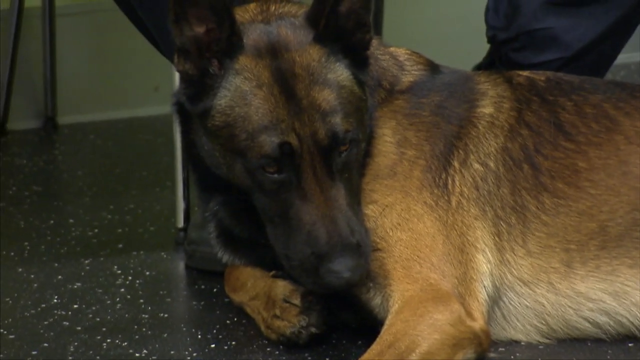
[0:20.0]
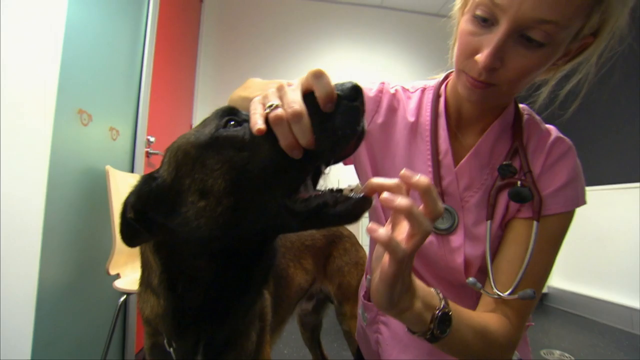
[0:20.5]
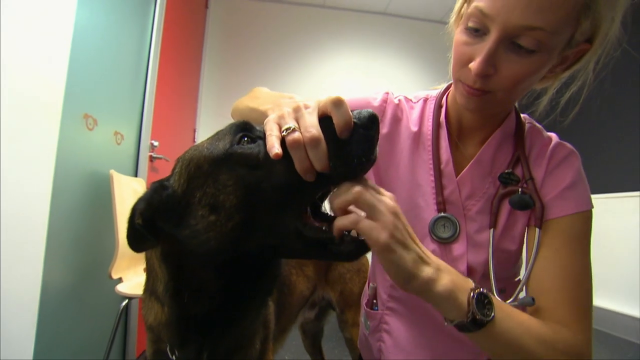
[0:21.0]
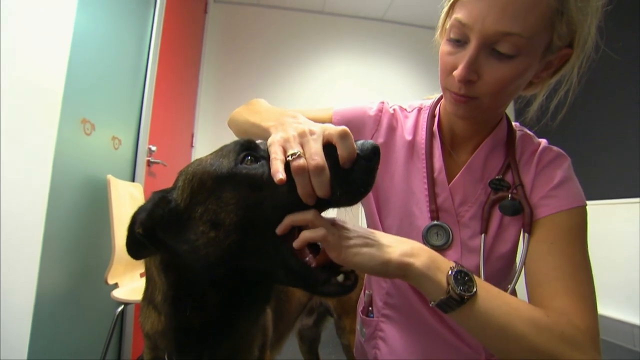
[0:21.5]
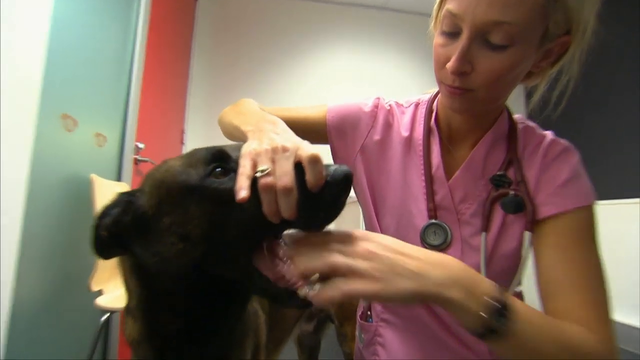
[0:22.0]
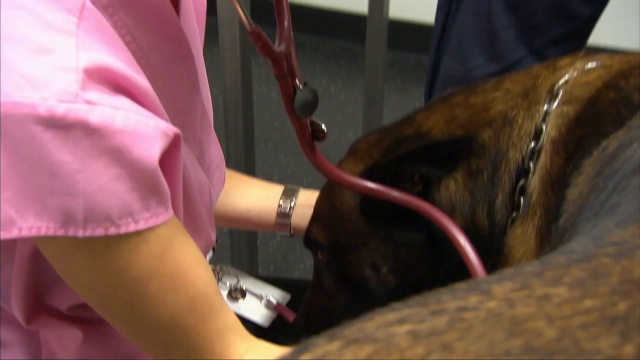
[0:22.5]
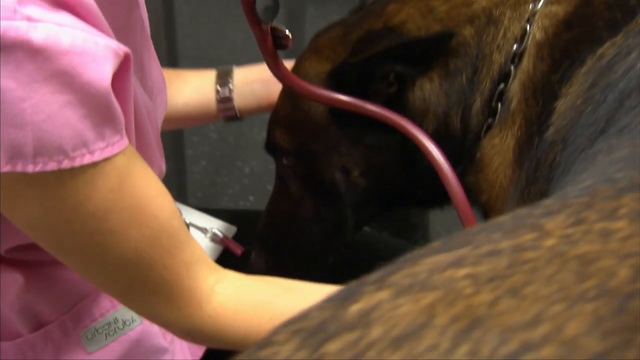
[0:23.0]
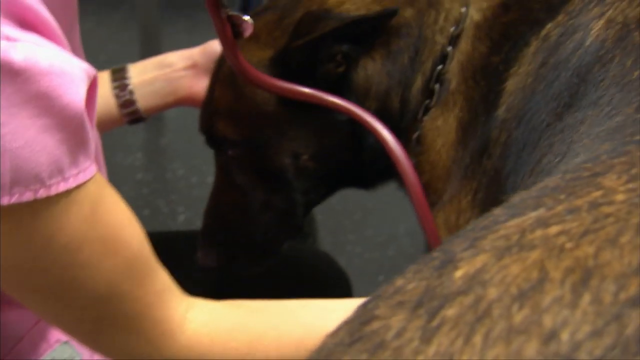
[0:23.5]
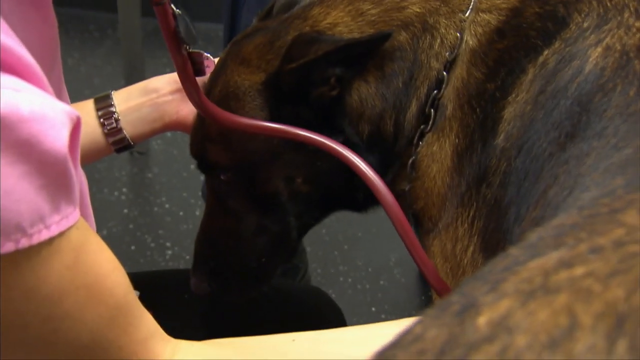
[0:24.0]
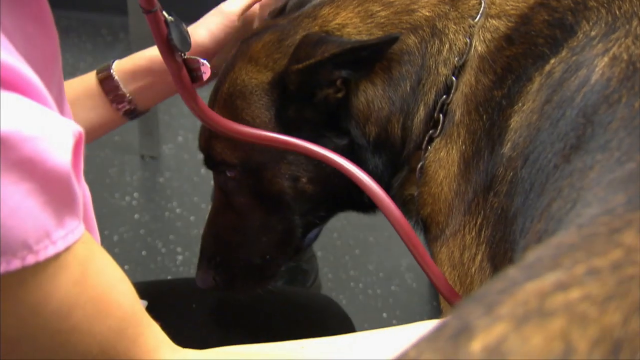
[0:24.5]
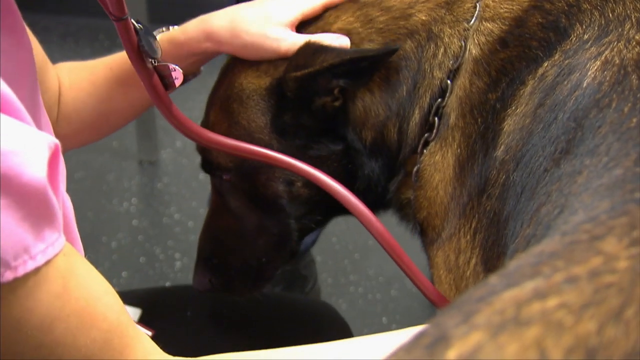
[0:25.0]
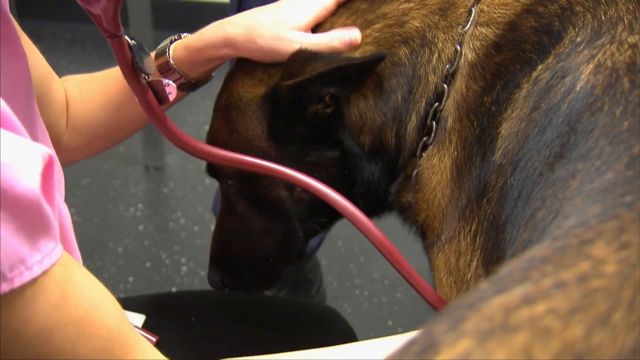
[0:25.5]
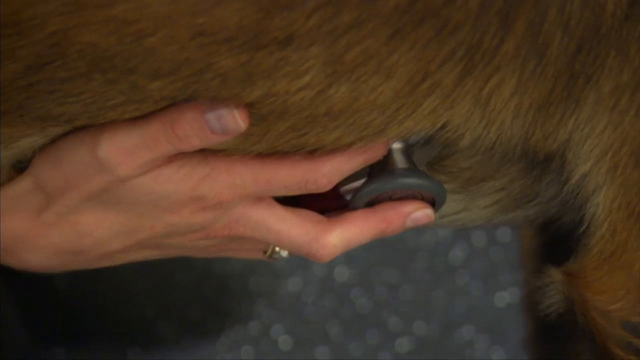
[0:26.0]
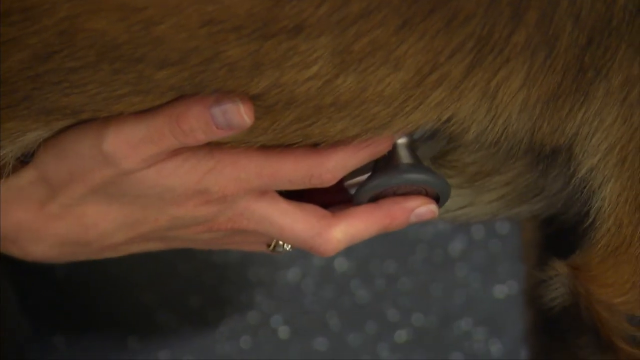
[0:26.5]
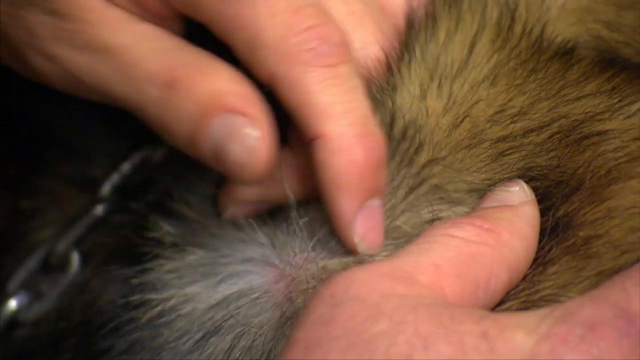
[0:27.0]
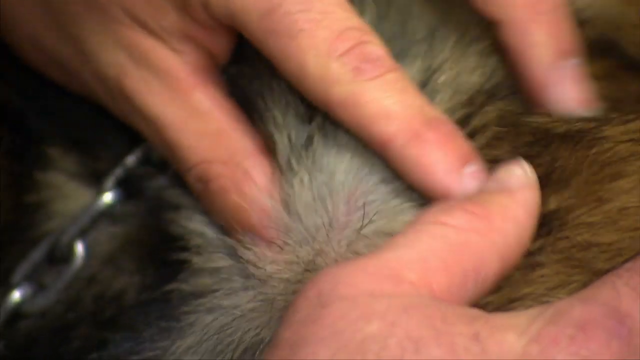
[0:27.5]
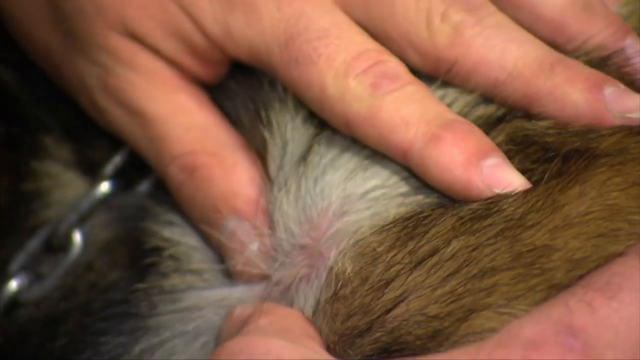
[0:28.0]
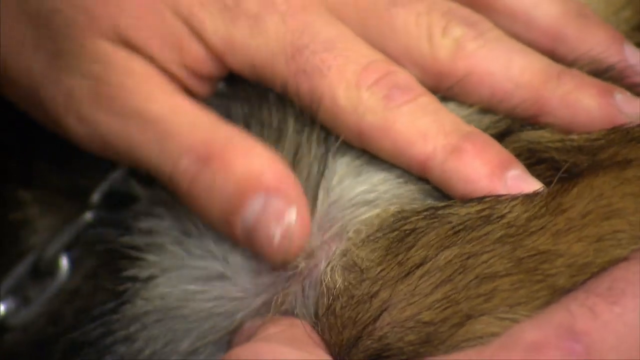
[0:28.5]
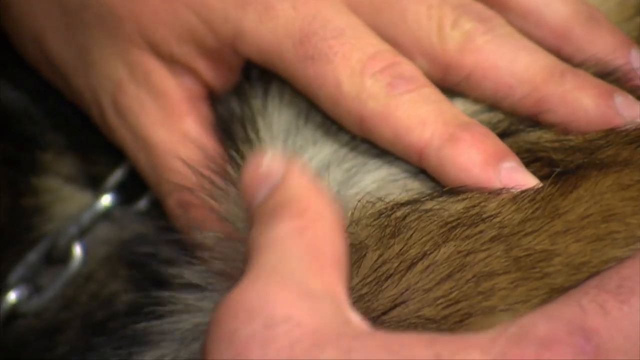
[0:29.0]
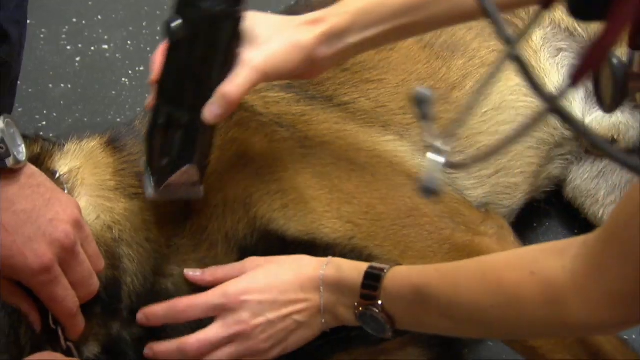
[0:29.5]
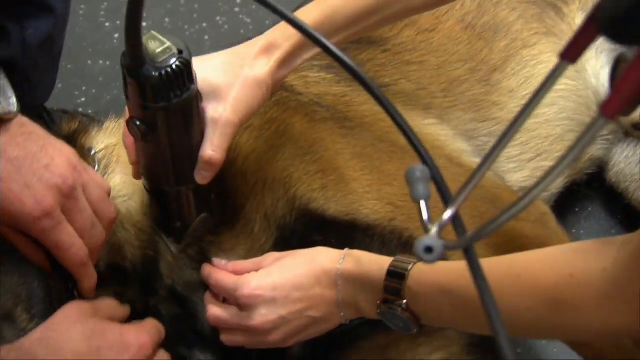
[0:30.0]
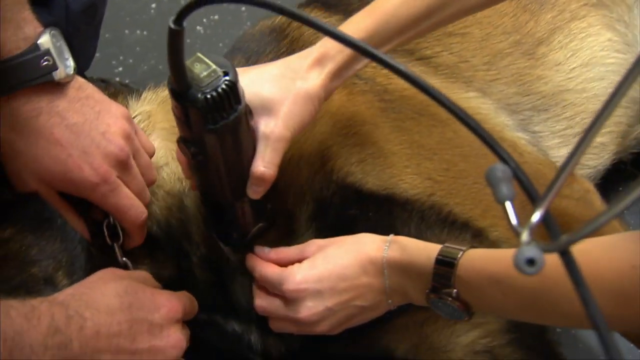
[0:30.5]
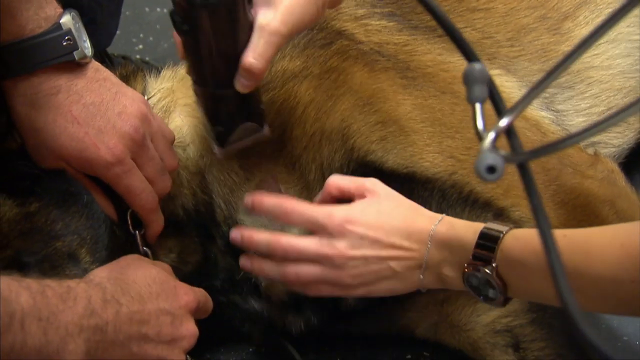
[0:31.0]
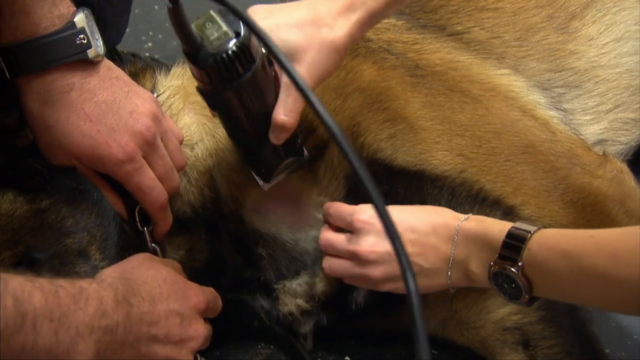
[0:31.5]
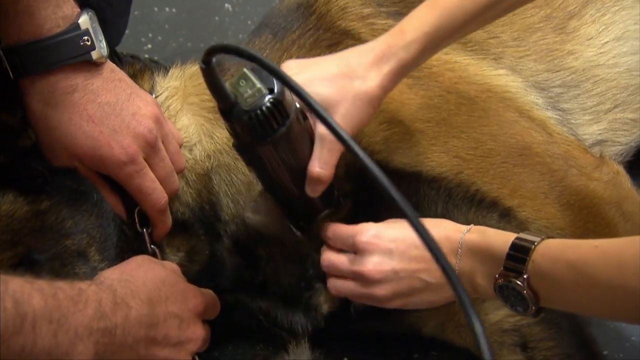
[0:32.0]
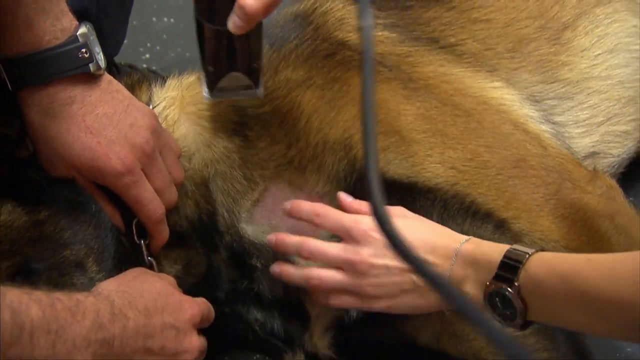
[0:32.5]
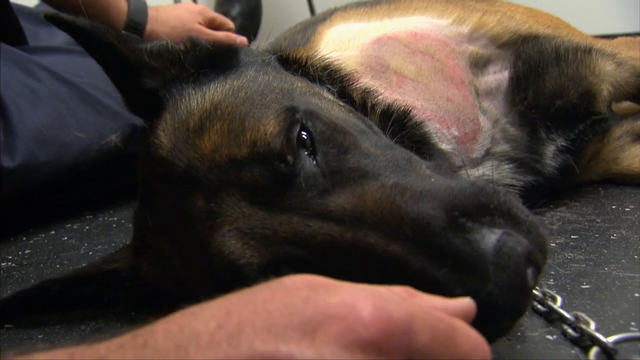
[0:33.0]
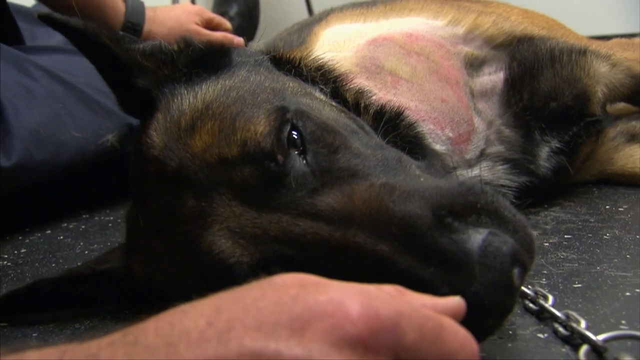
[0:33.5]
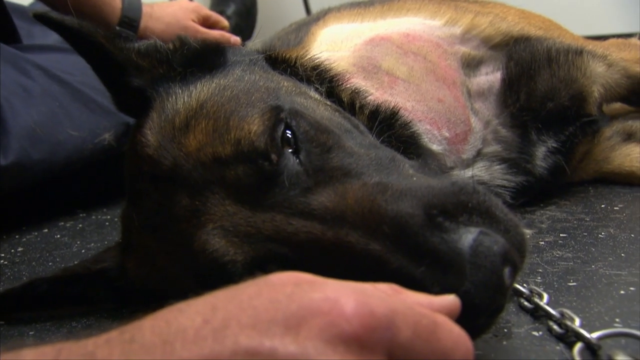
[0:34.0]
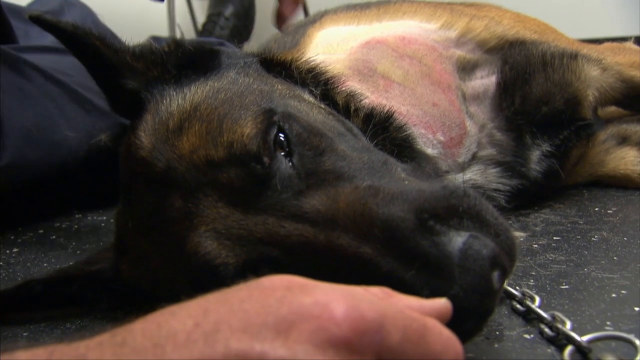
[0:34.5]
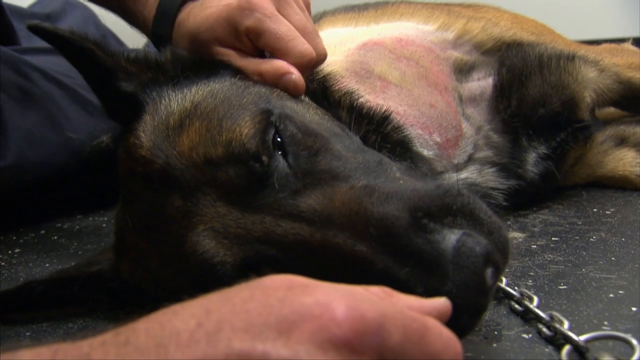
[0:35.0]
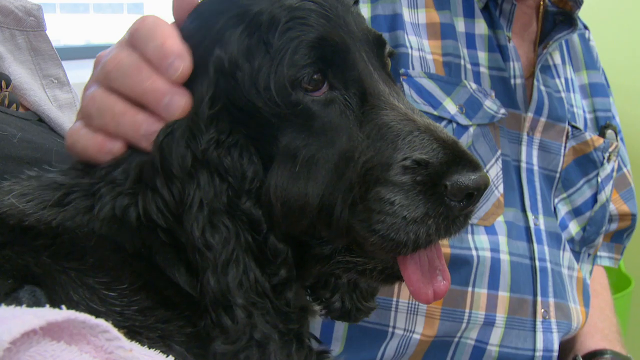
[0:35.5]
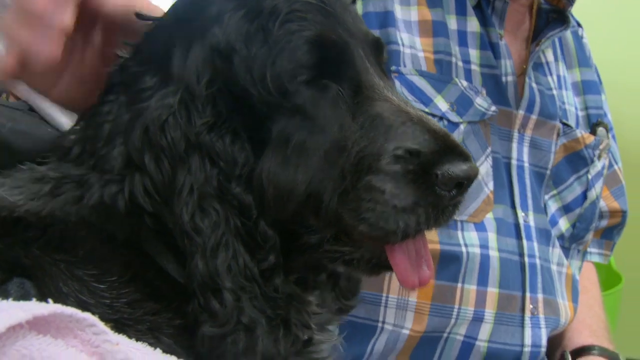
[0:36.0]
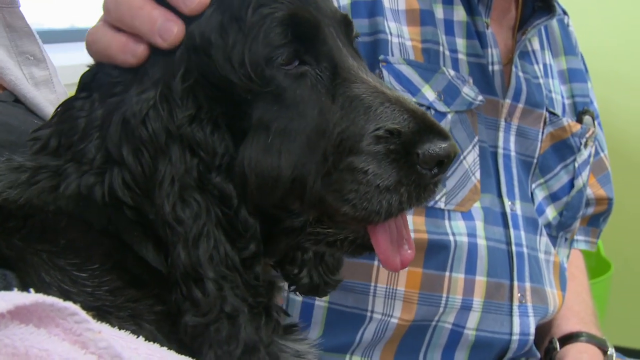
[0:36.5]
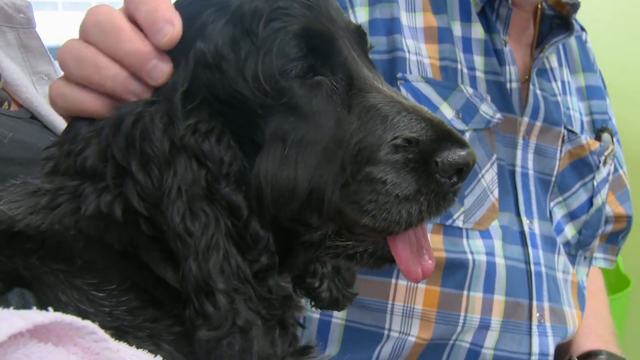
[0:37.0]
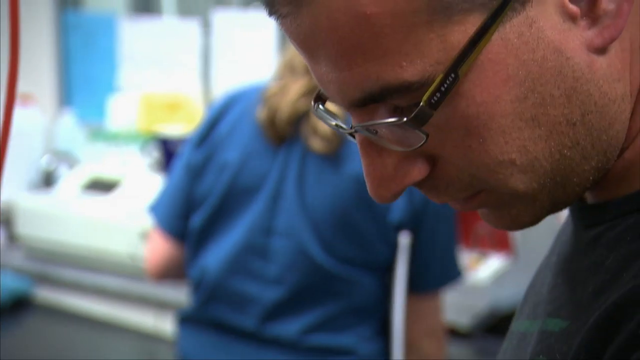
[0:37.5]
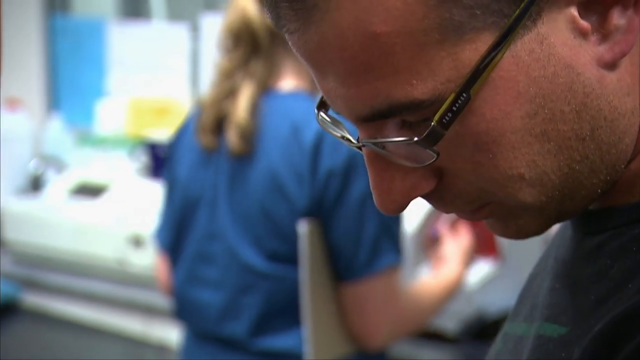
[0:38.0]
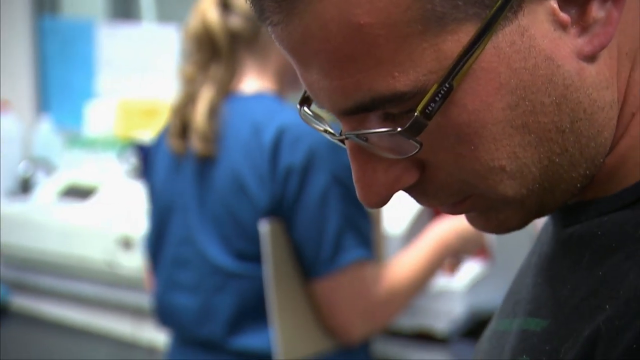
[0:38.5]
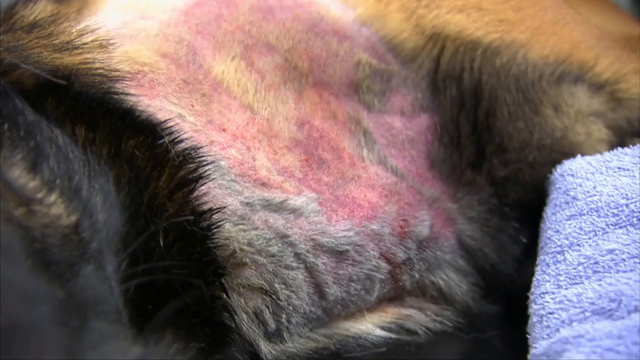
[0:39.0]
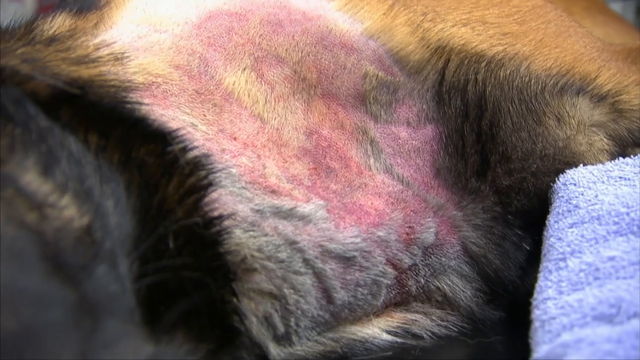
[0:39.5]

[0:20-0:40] What appears to be a doctor works with a dog, examining it. The dog's hair is cut, and something is wrong with the dog; it is sick. A woman puts her hand inside the dog's mouth. Where the dog has been cut, there are a lot of bruises on its stomach.